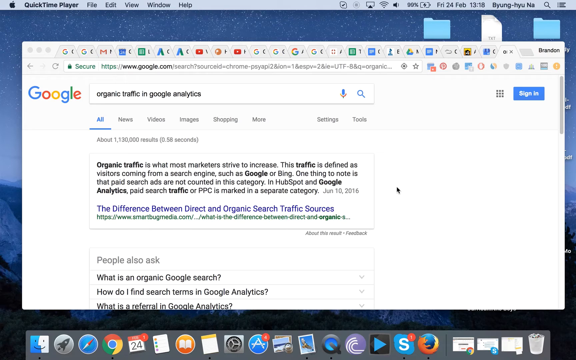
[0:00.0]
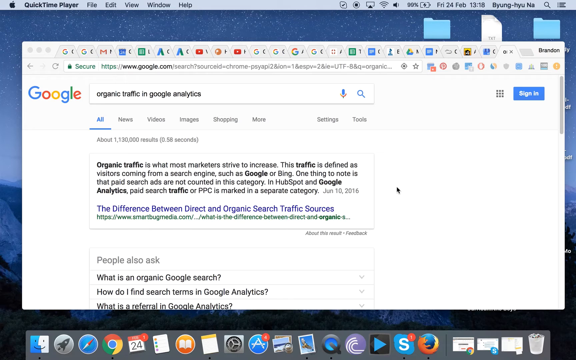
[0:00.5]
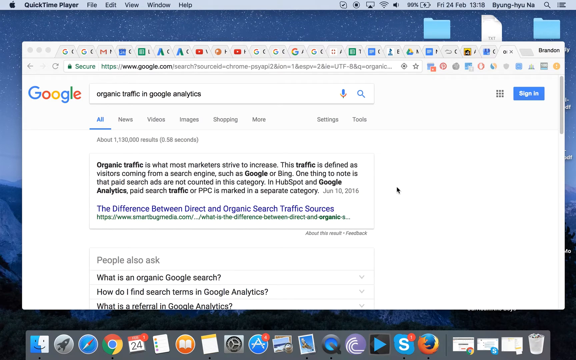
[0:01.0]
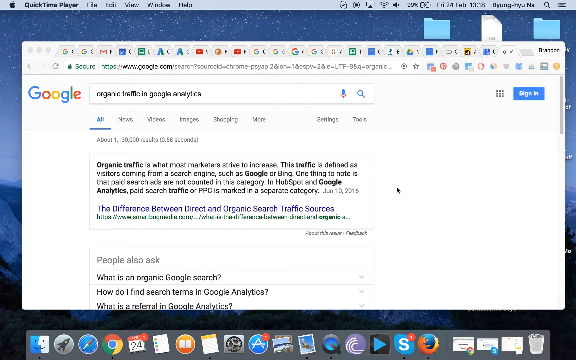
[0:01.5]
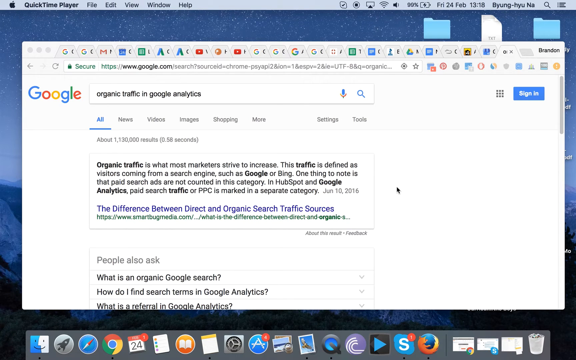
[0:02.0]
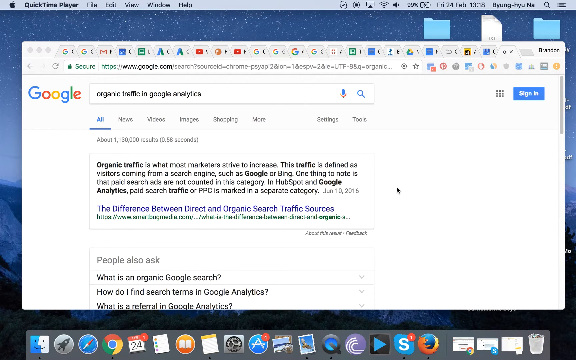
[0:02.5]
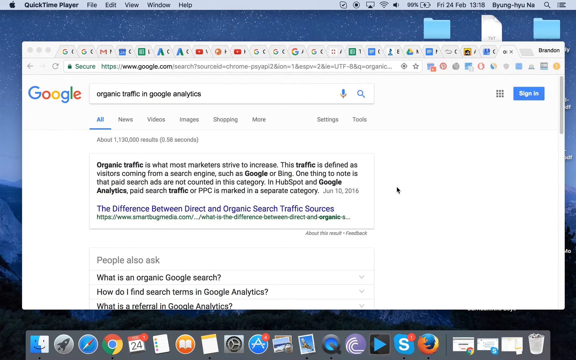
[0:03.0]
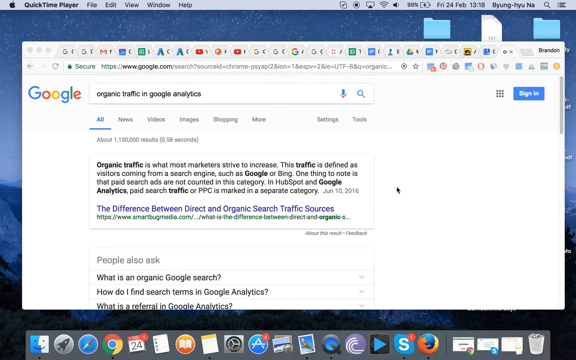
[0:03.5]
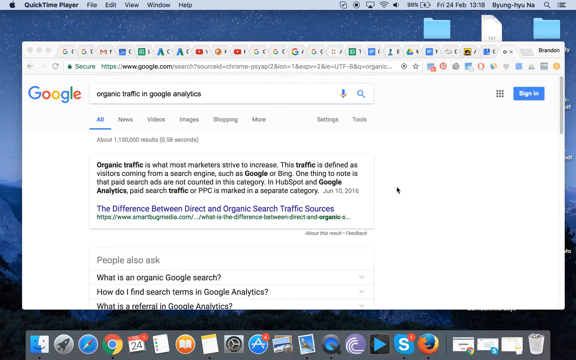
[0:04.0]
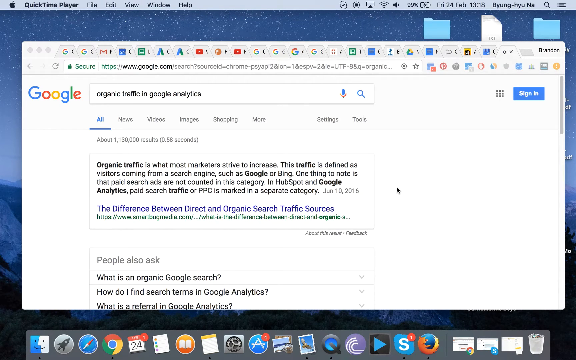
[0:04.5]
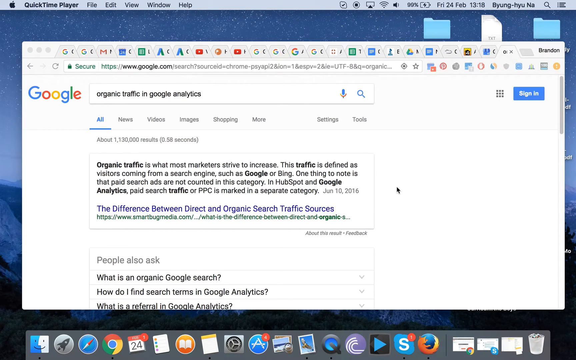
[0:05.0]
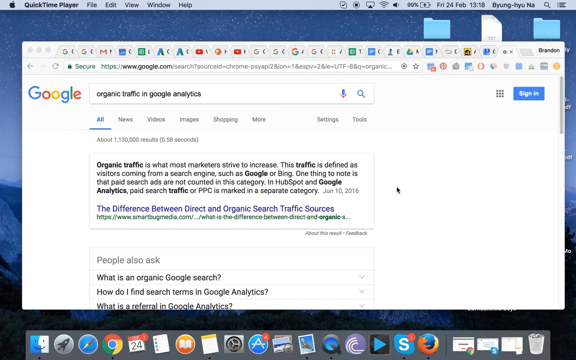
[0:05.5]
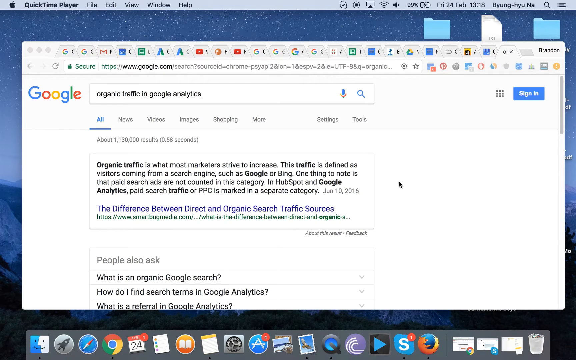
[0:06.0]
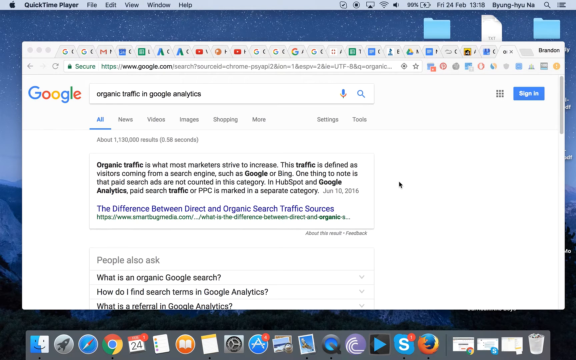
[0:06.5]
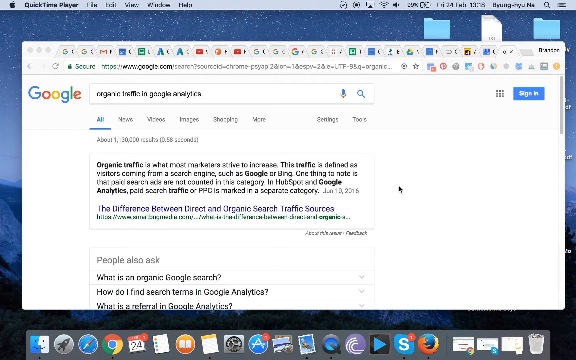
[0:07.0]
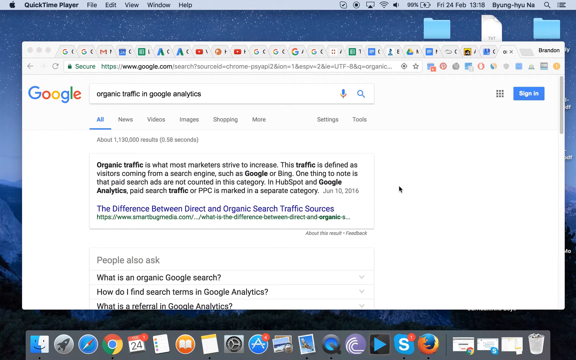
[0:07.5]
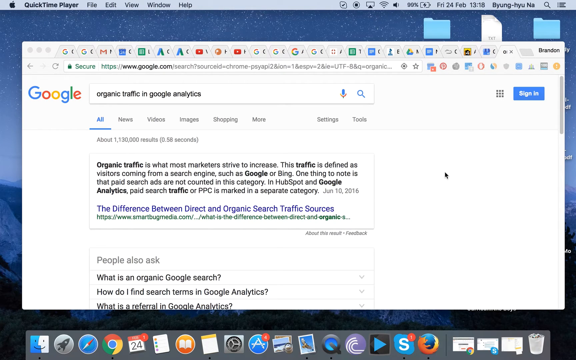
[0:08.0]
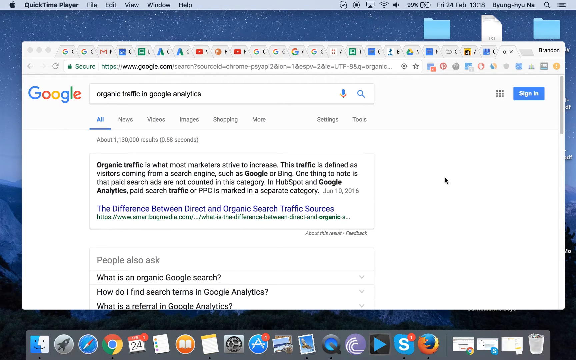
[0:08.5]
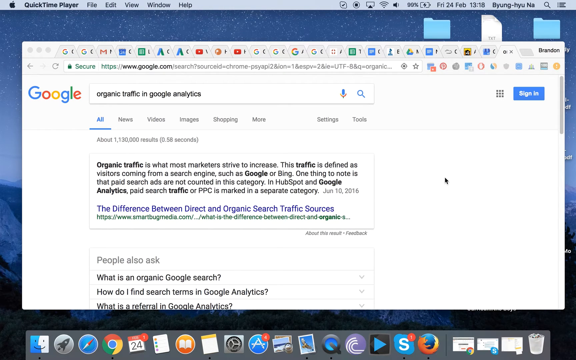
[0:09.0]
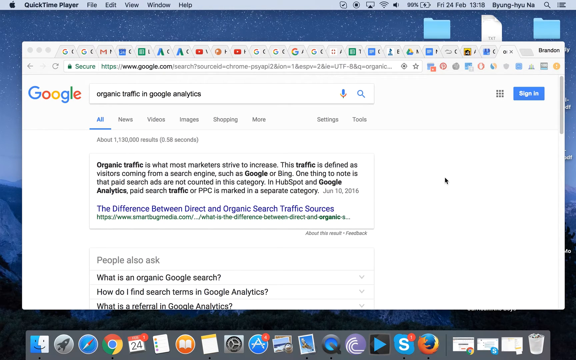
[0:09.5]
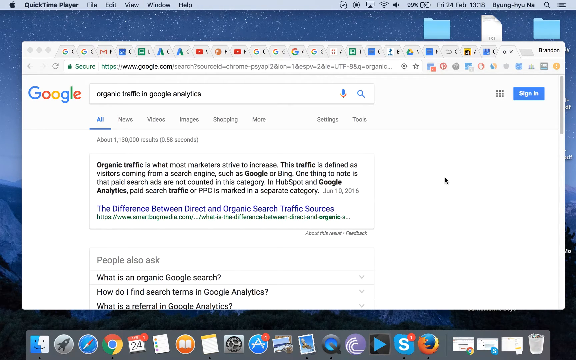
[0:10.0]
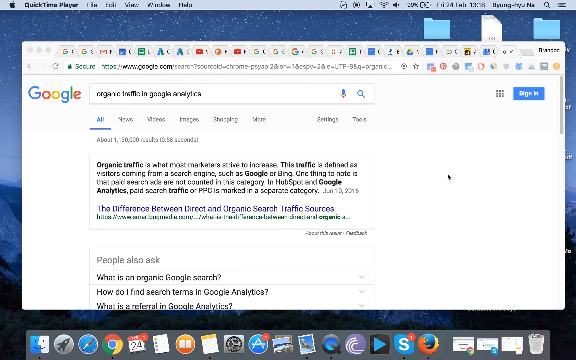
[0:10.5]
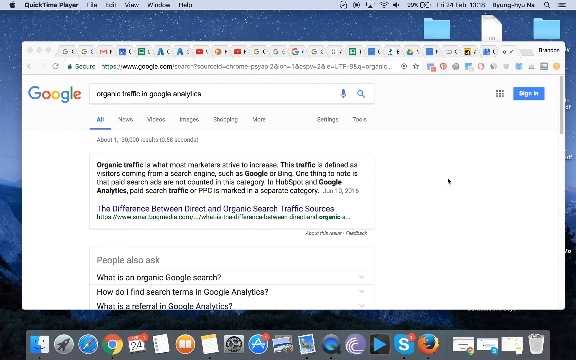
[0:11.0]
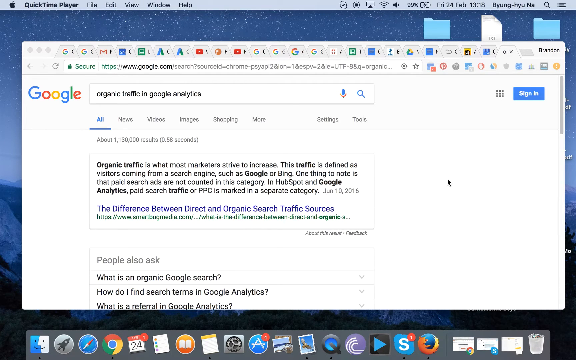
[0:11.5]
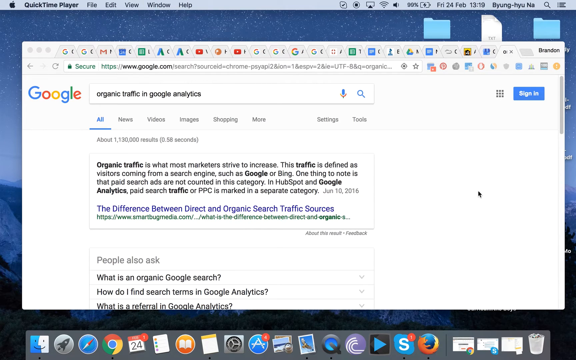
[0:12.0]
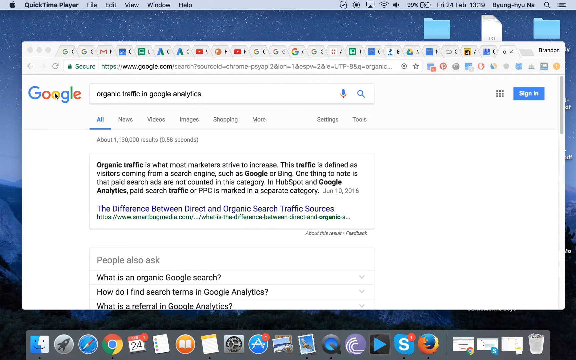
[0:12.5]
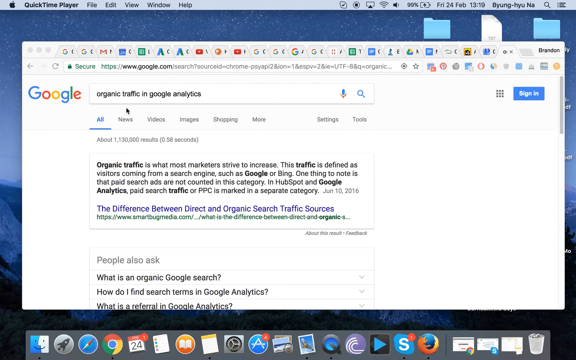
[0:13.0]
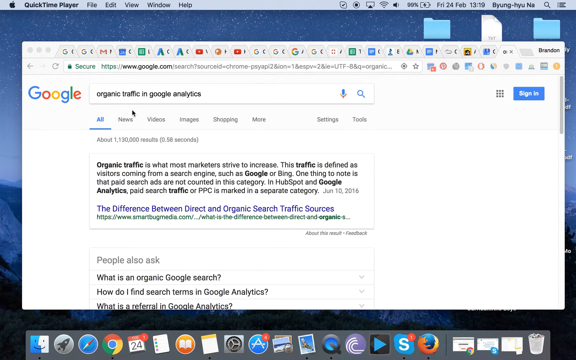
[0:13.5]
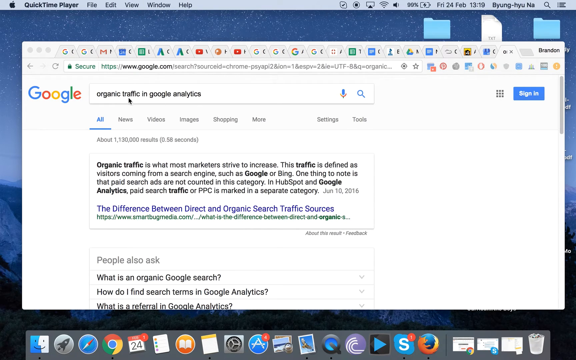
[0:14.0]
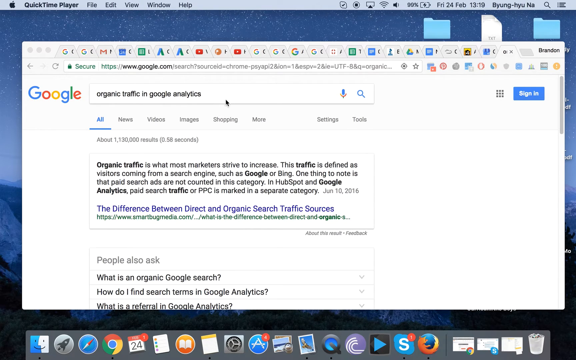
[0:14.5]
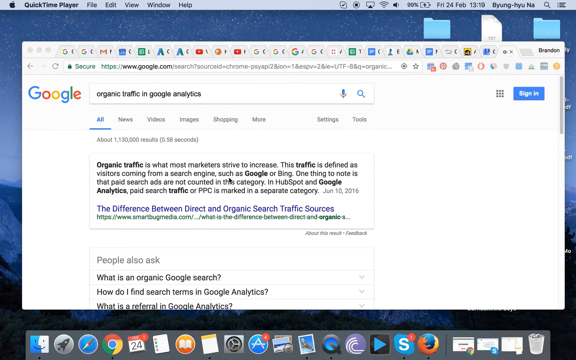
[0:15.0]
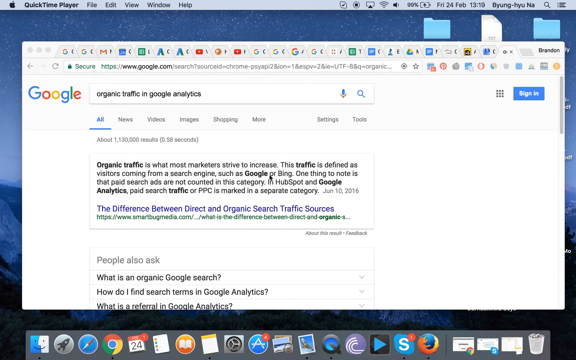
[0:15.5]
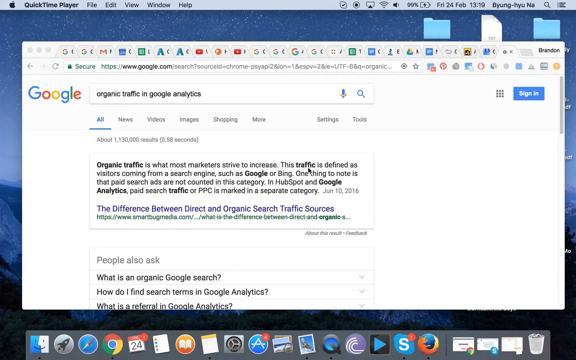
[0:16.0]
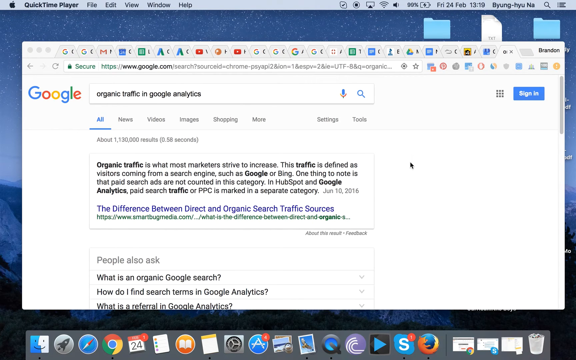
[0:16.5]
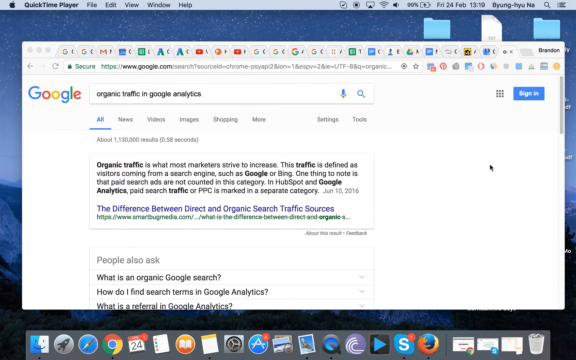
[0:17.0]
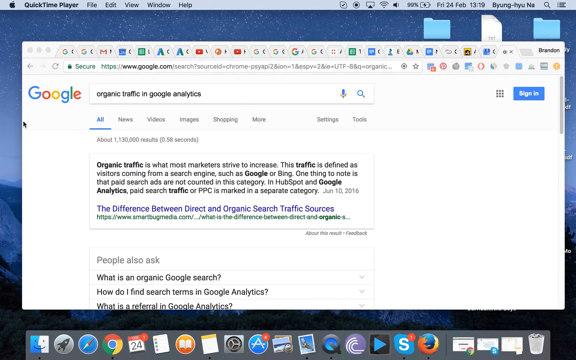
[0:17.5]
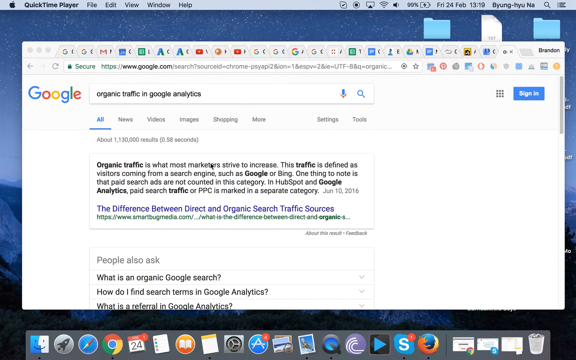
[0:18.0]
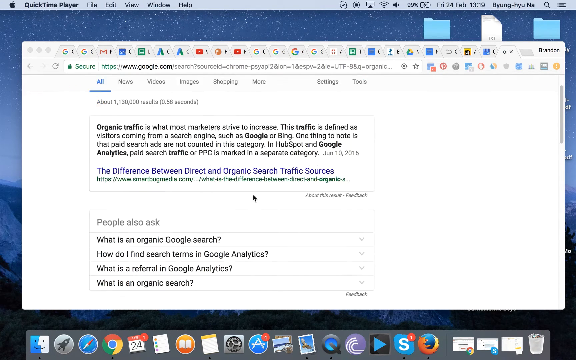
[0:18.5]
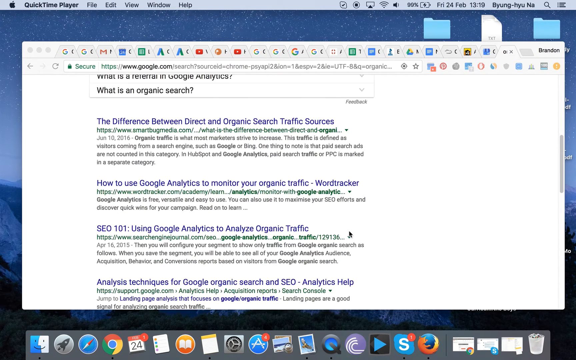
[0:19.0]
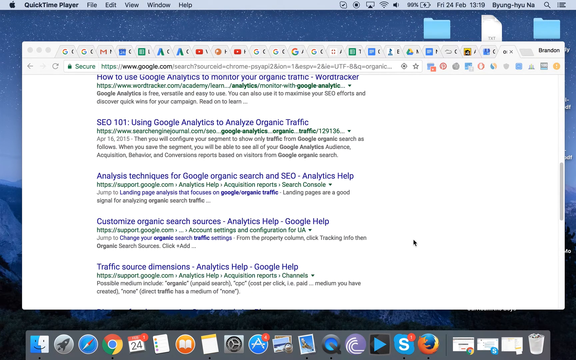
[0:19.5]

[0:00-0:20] A computer screen shows a page with the Google logo: a blue capital G, a red o, a yellow o, a blue lowercase g, a green lowercase l and a red lowercase e. Part of the homepage background, which looks like a starry sky, is still visible around the edges. Someone has typed "organic traffic in Google Analytics" into the search, and the cursor scrolls down through the results. The first result at the top reads "organic traffic is what most marketers strive to increase. This traffic is defined as visitors coming from a search engine such as Google or Bing. One thing to note is that paid search ads are not counted in this category. In HubSpot and Google Analytics, paid search traffic or PPC is marked in a separate category."